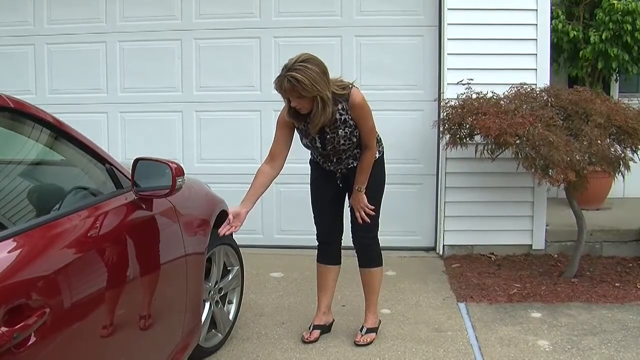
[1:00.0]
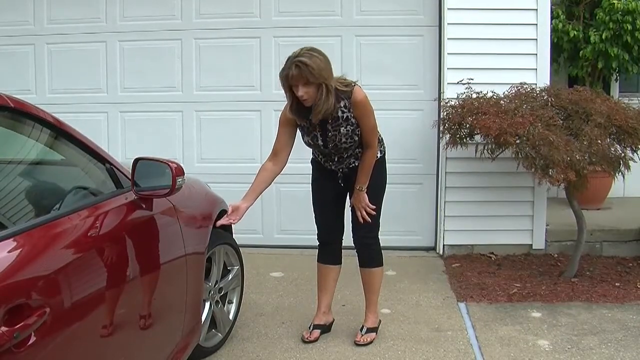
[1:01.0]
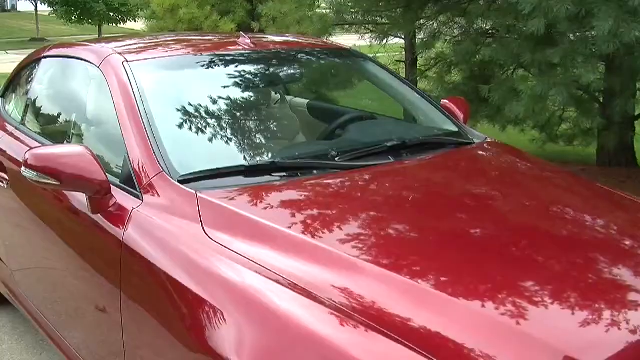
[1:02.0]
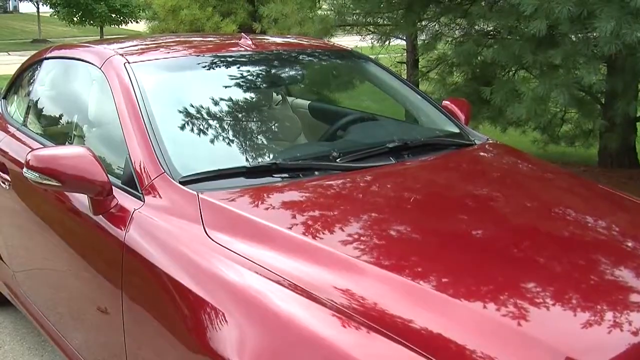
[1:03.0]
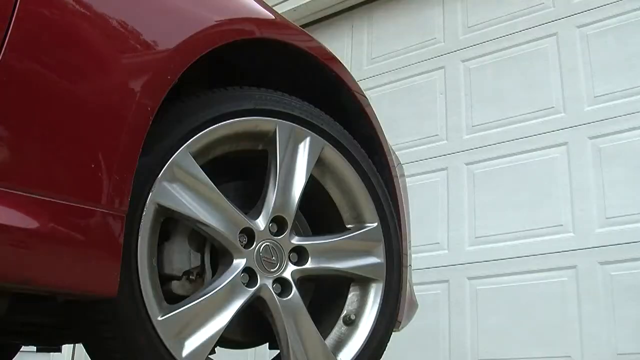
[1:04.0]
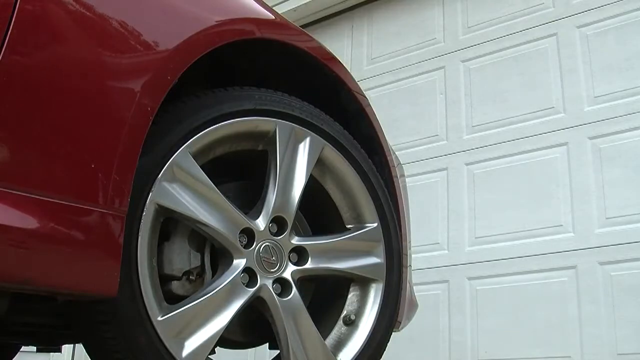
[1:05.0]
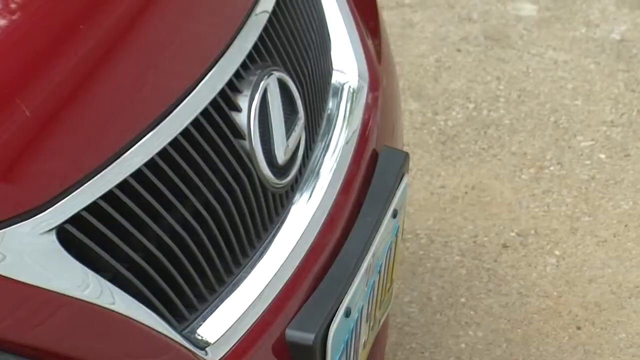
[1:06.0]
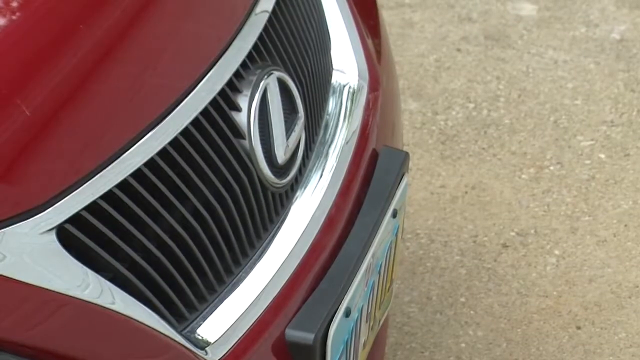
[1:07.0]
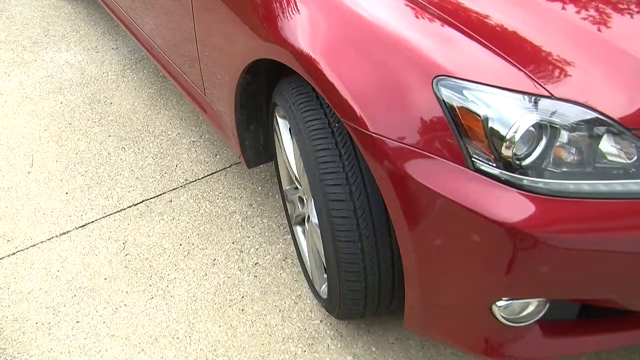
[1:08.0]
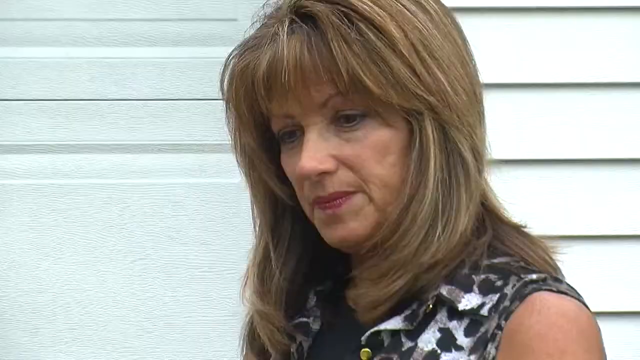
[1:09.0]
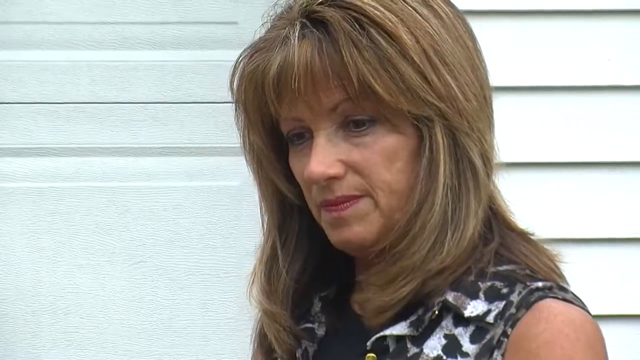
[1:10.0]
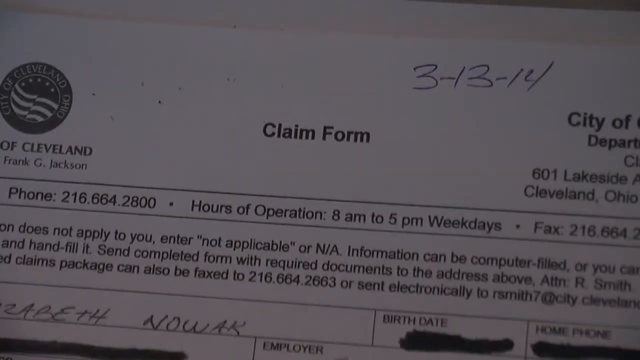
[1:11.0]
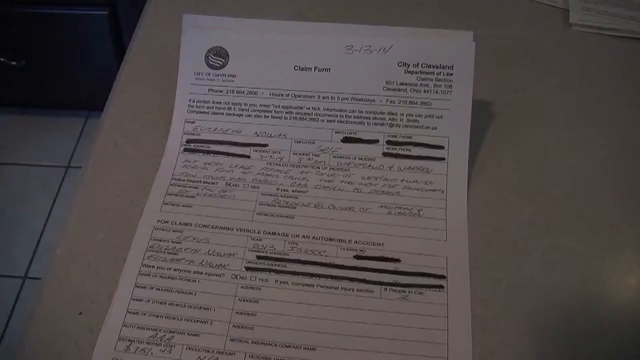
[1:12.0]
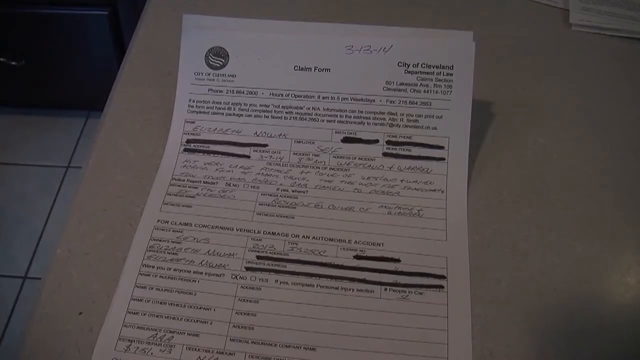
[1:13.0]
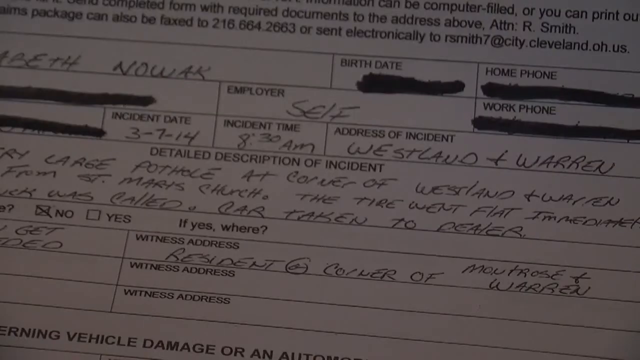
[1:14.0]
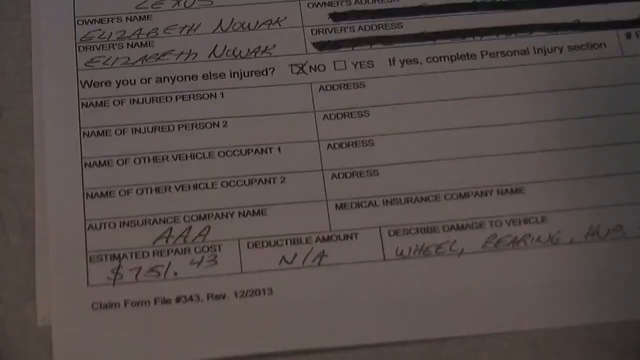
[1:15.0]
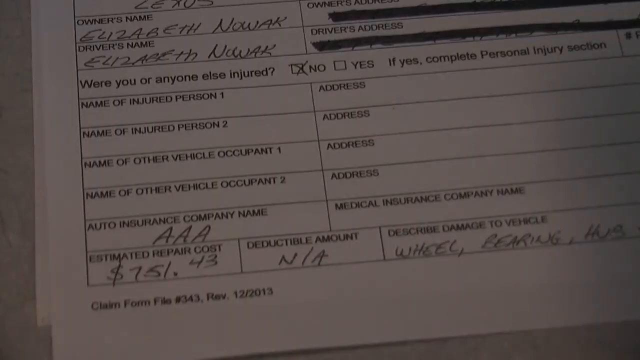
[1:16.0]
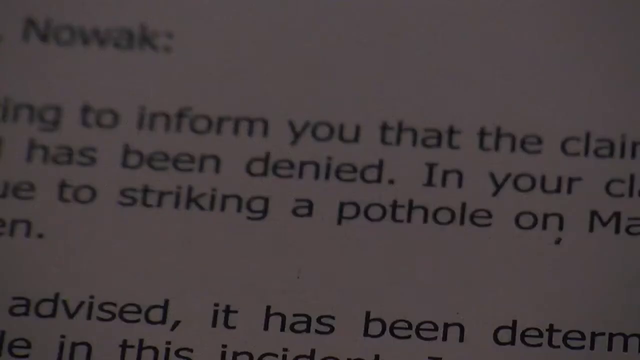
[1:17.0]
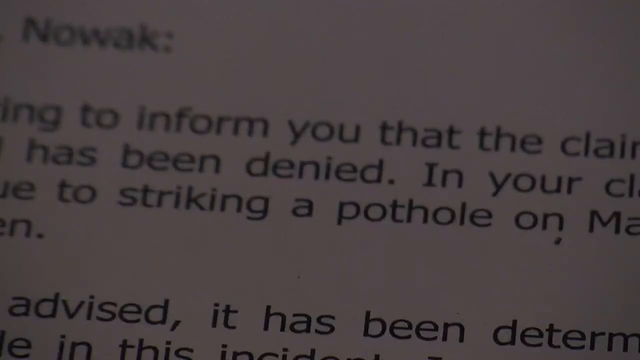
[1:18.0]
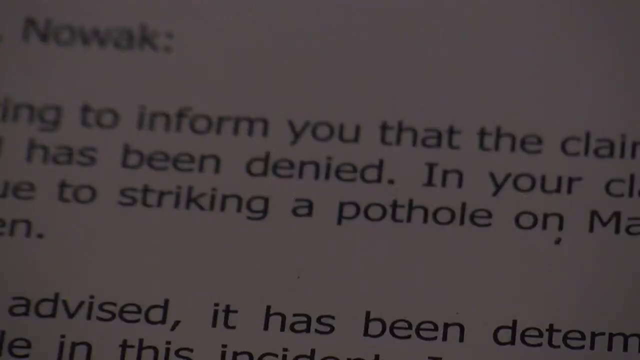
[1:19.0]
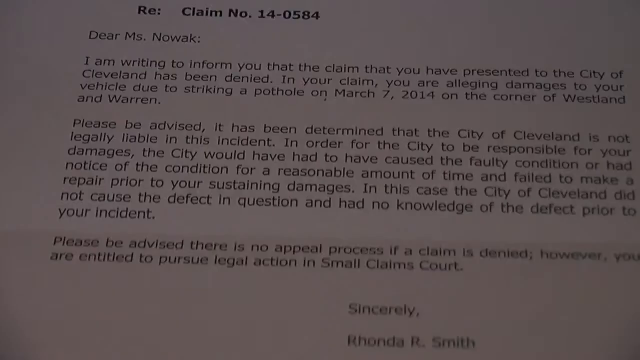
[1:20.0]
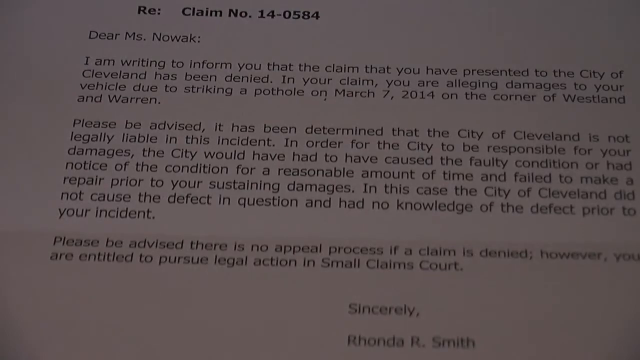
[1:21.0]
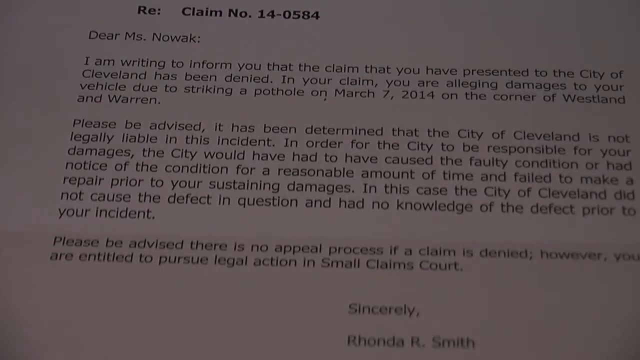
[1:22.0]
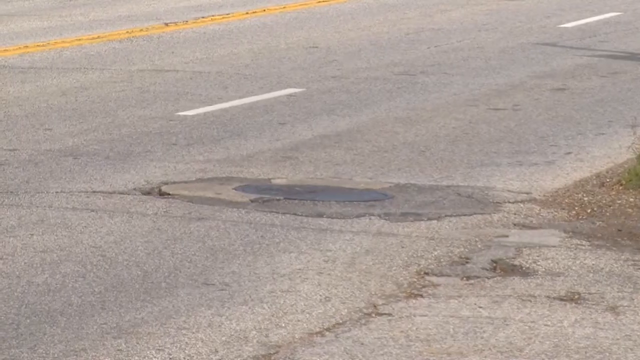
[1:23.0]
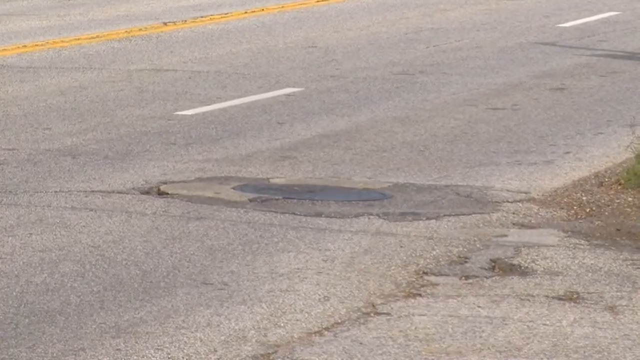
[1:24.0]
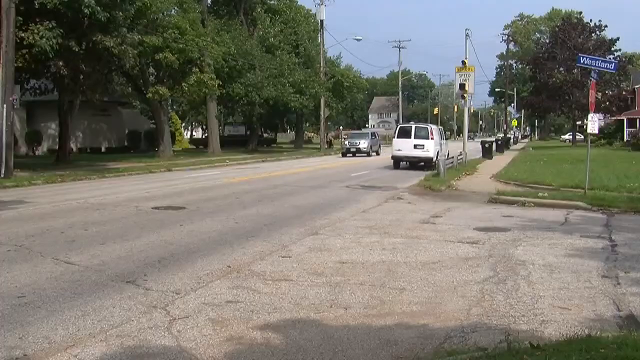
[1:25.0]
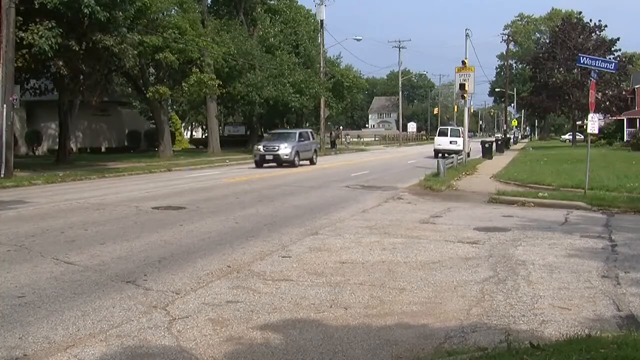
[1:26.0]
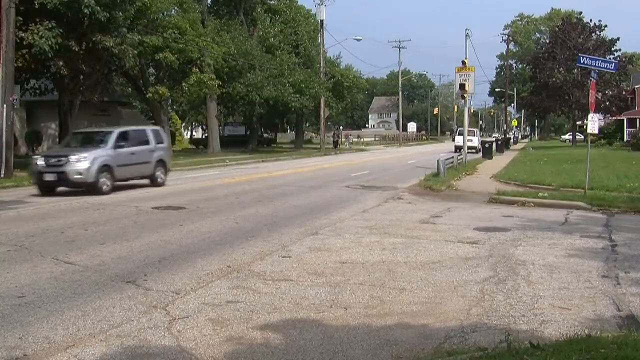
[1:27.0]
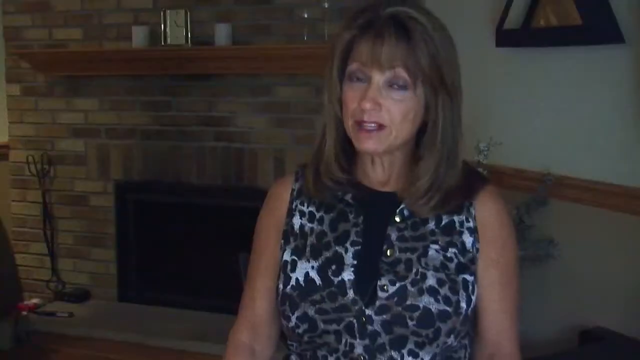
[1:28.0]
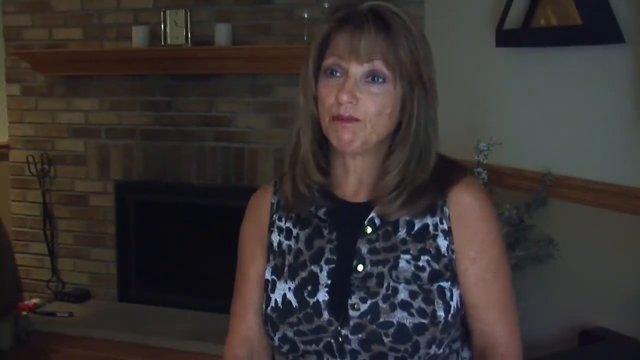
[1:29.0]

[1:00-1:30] The lady stands near the maroon car, her reflection visible on it, in front of the garage door of a house. She shows the camera the tyre, apparently pointing out the damage. The camera zooms in on the tyre, showing the rim, and the car is a Lexus. A claim form then appears, apparently for something she is trying to claim. It shows a phone number, hours of operation of 8am to 5pm, the dates 2013-2014, Cleveland, and other writing. The full claim form is shown, with a detailed description of the incident stating it was caused by a pothole at the corner of Westland and Warrens. It lists the name and address of the injured person, a second injured person, another vehicle occupant, medical insurance companies, and the auto insurance company, AAA. The estimated repair cost is $75.43 and the deductible amount is null. The camera zooms in on the claim, showing claim number 14-05-84 and the text "I am writing to inform that". The video moves to the scene of the incident, showing the rough road in poor condition, then returns to the lady sitting in her house.